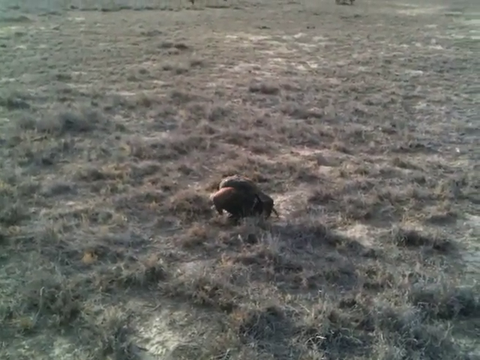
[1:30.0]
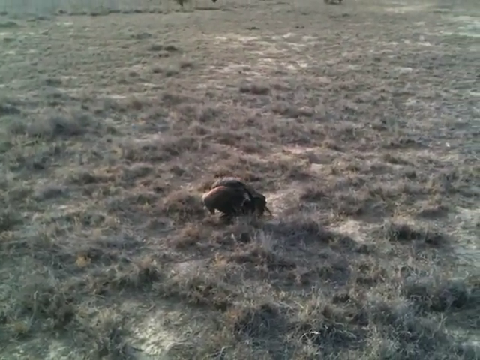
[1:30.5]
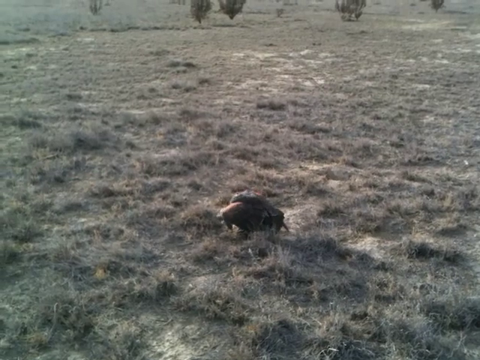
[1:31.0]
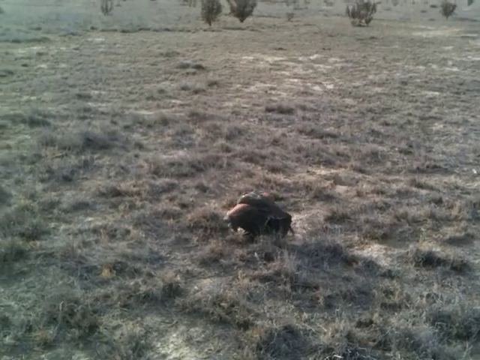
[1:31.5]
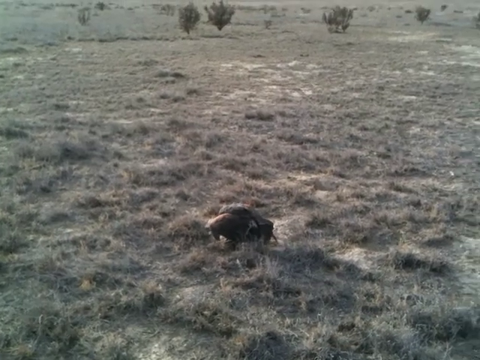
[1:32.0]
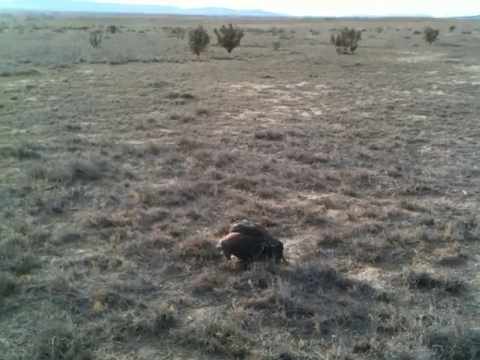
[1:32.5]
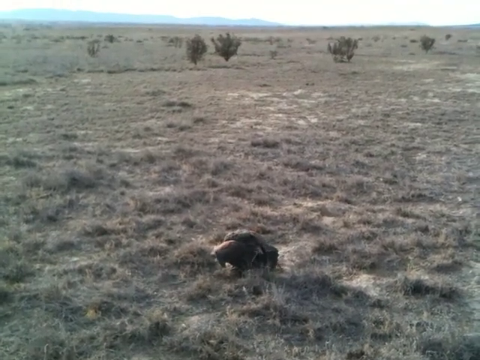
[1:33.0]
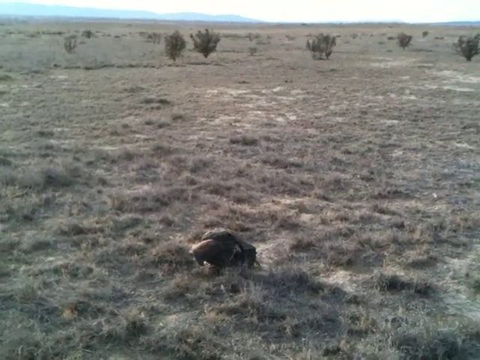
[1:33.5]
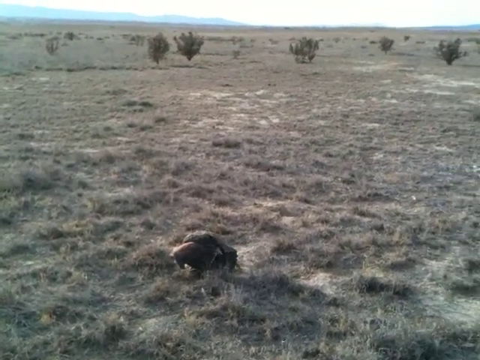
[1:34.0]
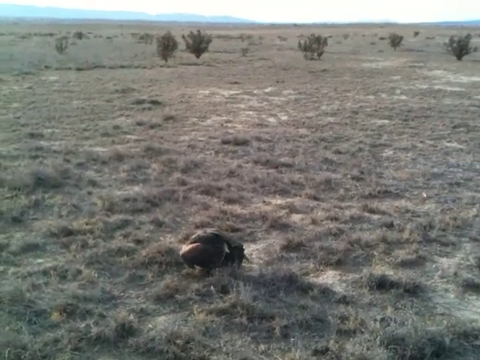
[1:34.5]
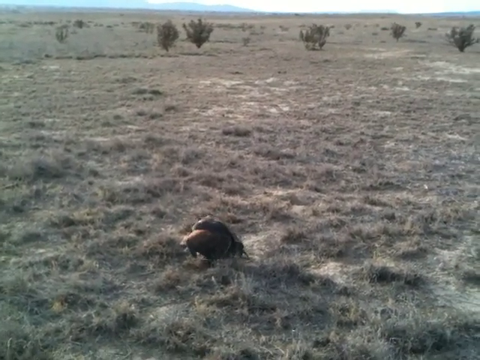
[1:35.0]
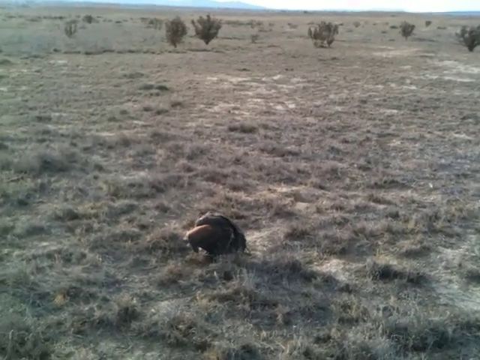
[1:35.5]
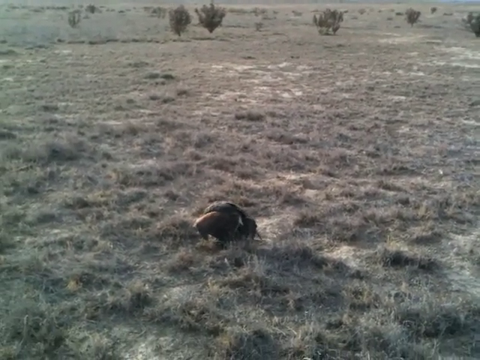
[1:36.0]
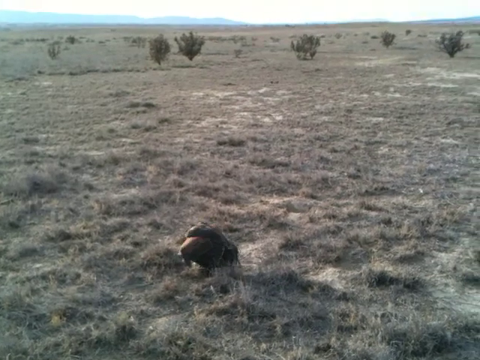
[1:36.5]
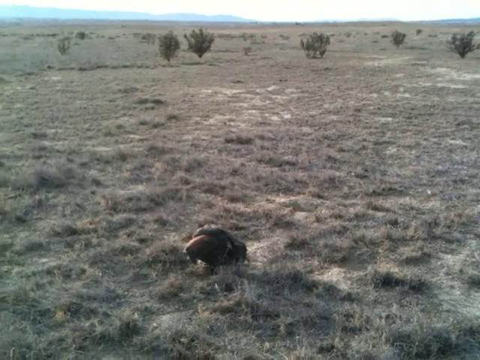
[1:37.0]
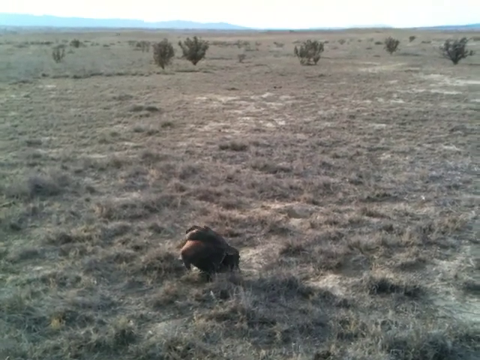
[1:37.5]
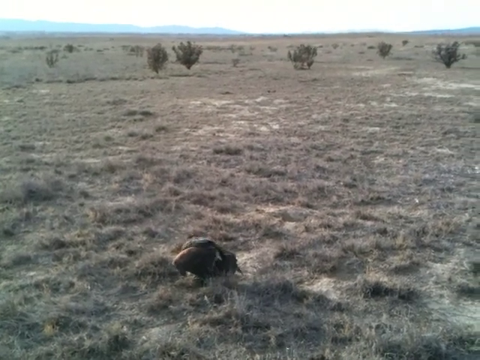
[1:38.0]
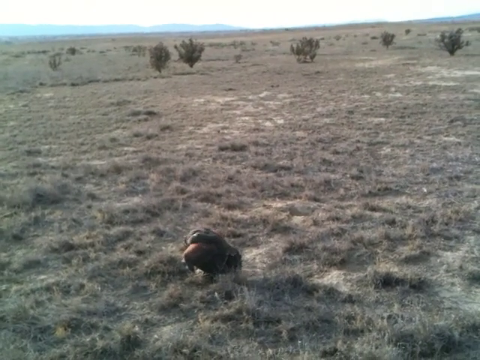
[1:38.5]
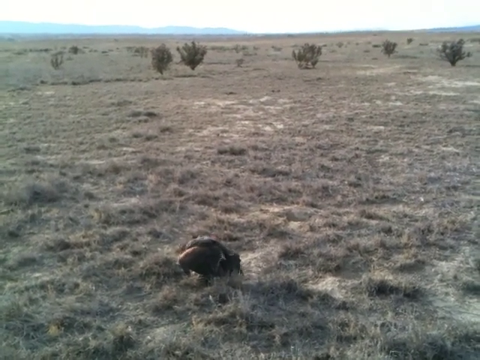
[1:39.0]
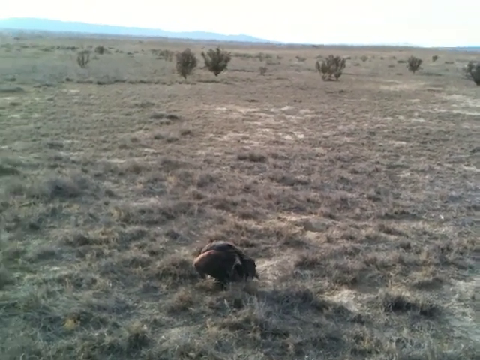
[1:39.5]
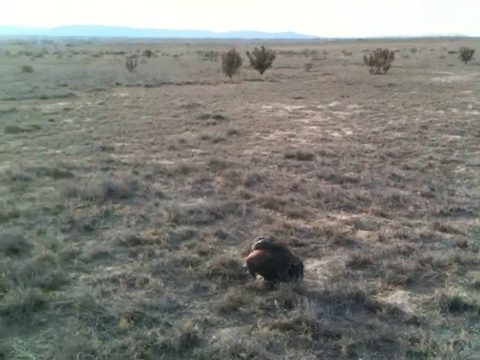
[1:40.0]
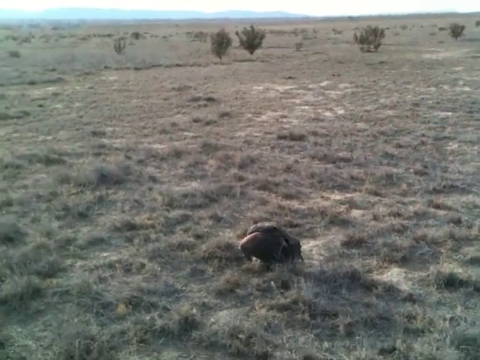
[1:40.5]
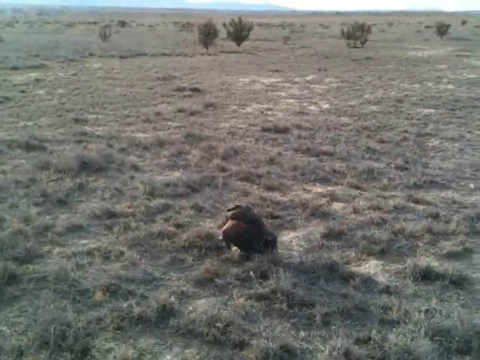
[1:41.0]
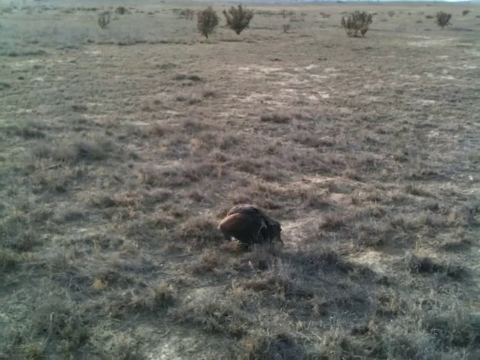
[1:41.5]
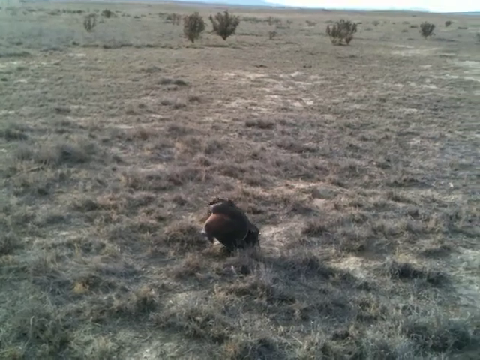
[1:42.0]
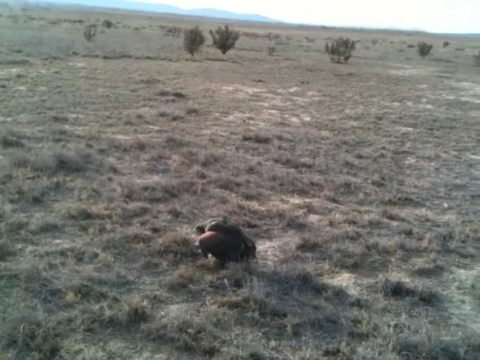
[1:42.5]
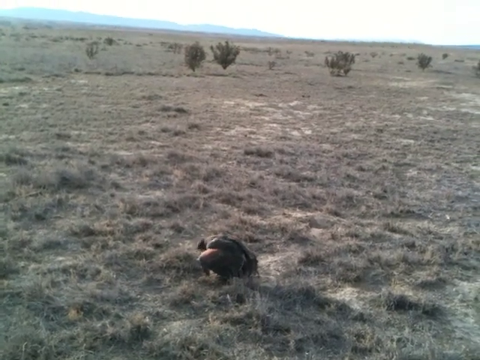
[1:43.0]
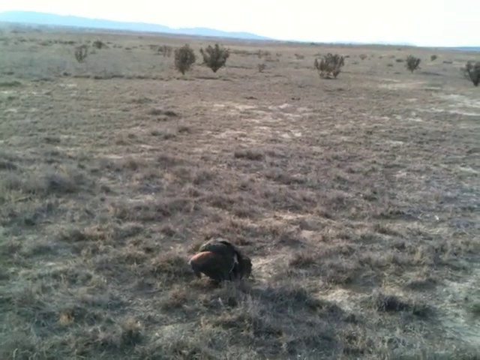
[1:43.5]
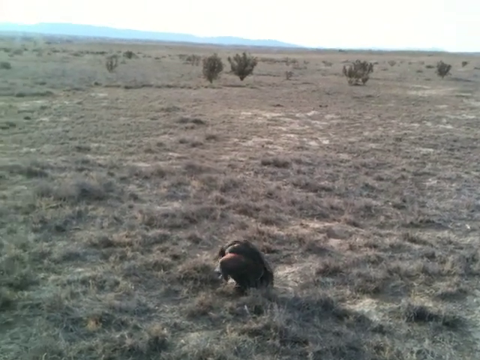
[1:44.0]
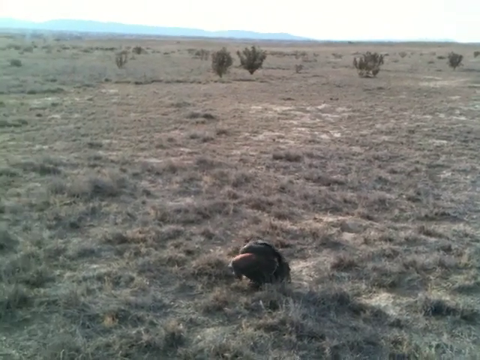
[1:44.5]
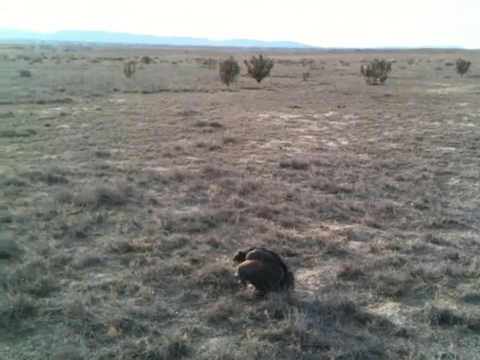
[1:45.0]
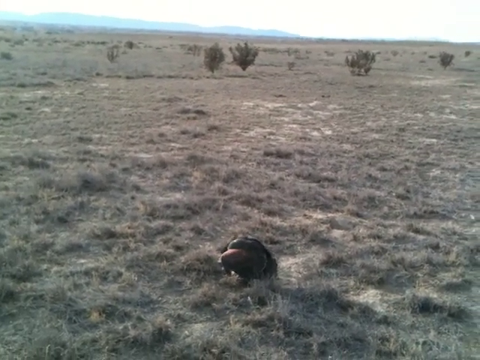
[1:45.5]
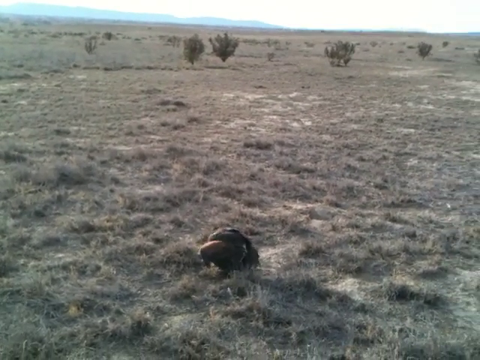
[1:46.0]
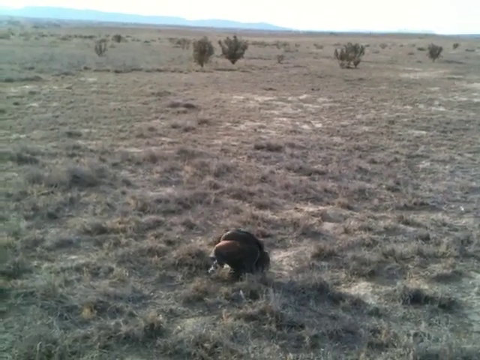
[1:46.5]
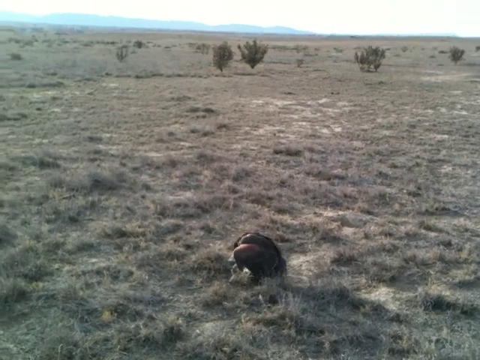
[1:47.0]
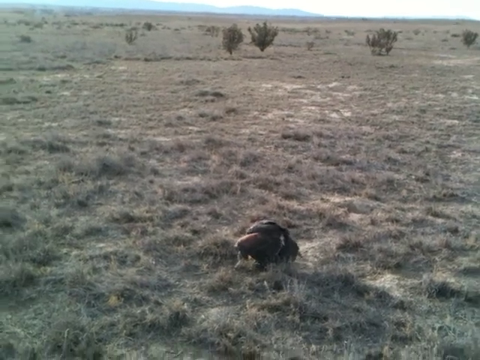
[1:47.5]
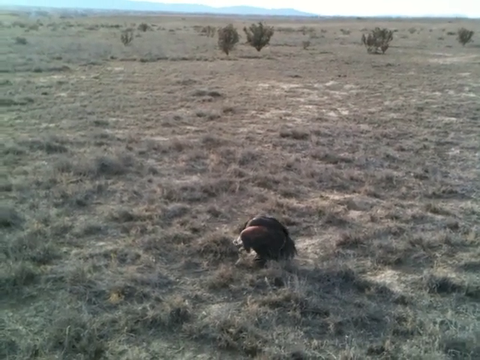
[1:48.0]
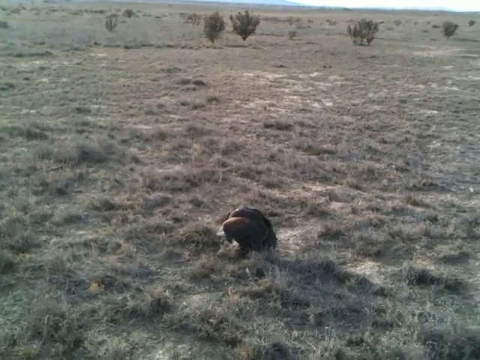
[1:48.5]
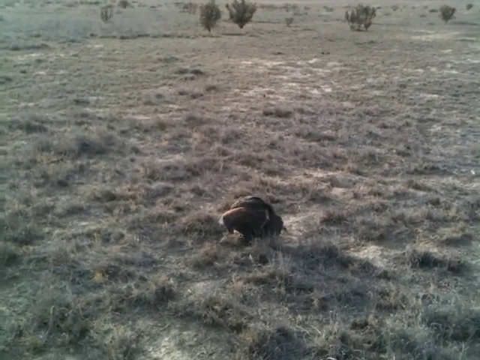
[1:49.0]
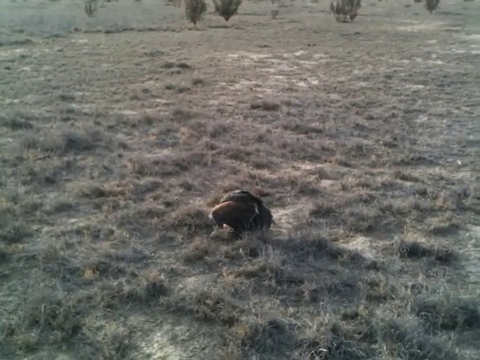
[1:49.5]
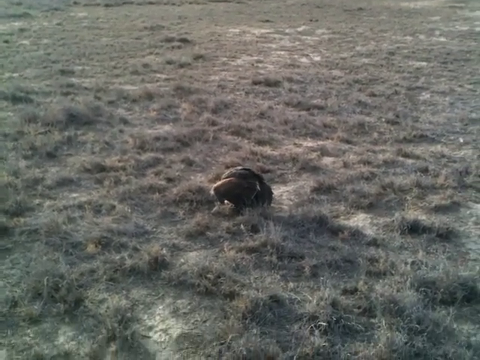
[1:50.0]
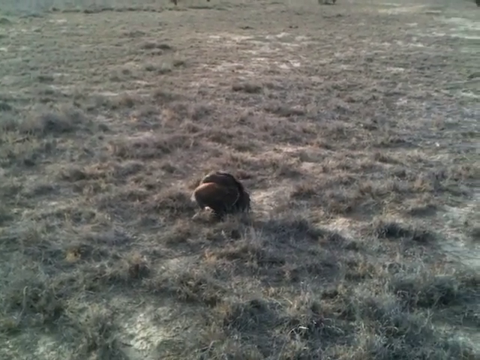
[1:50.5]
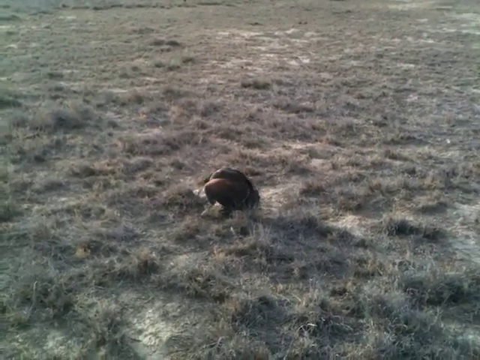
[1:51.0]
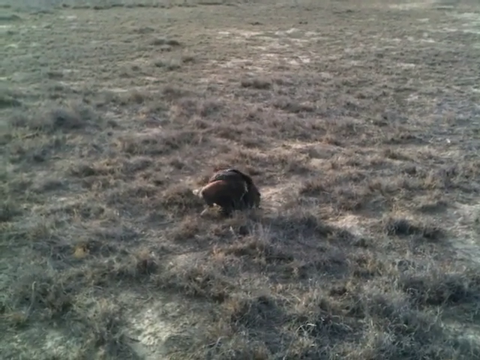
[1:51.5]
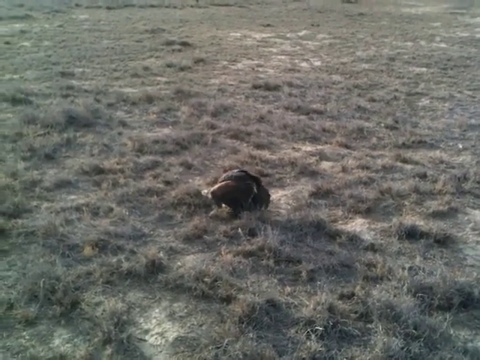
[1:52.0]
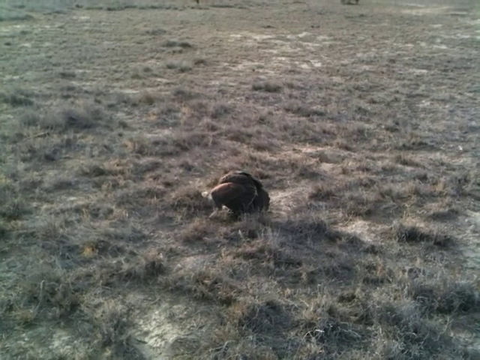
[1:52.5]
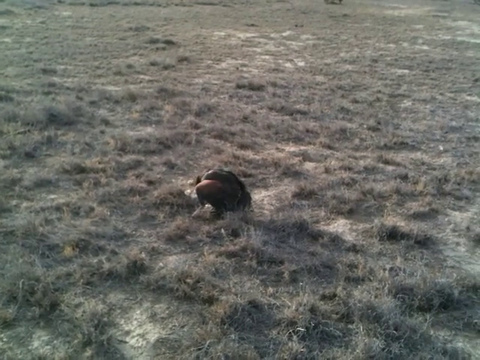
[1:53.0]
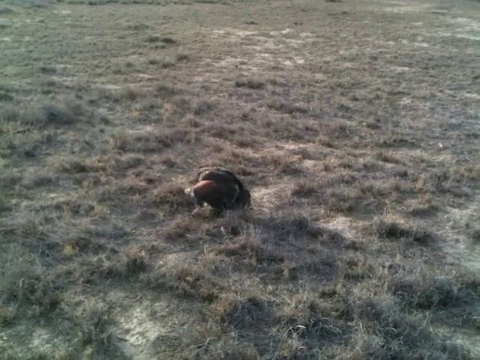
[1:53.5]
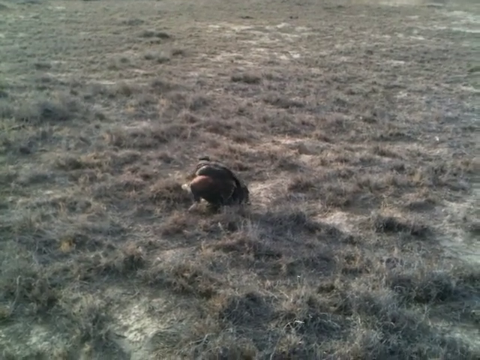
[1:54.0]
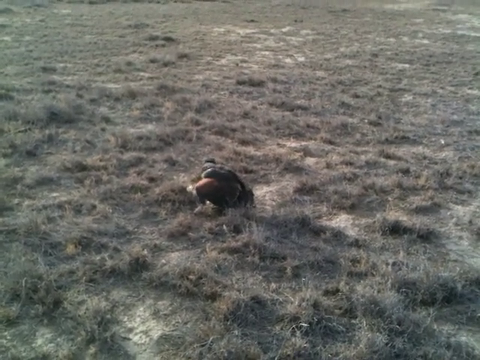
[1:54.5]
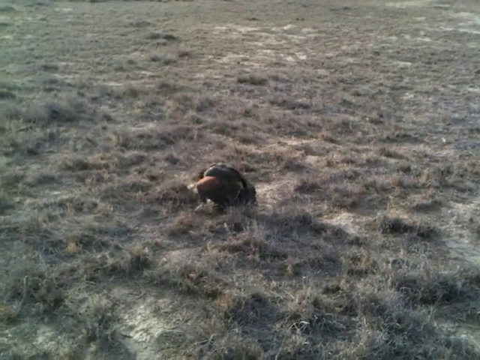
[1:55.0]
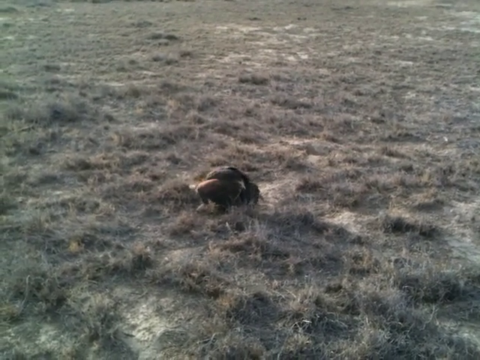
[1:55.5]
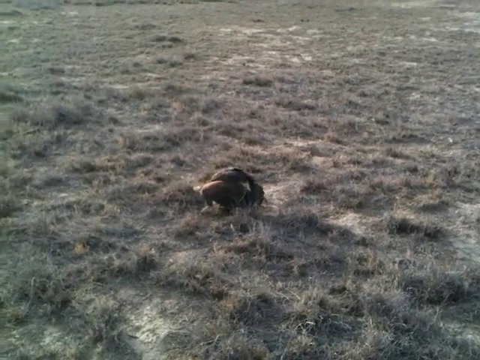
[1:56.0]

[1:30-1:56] The bird is with the hare, its back toward the man with the camera, and it keeps plucking fur from the hare, putting the fur onto the side. The camera is shaky. The ground surrounding the bird is dead and dry. The bird stops for a bit, looks to each side, then continues removing fur from the dead hare. Silhouettes of mountains can be seen in the distance, along with scattered plants that look like bushes. The area looks dry, as if it hasn't rained in a while, and the plants look like plants that grow in dry areas. The grass is dead for a long distance.